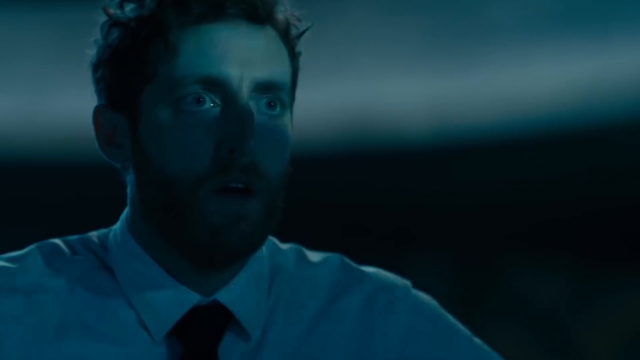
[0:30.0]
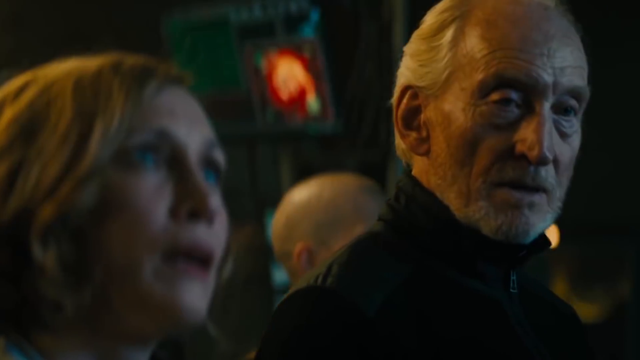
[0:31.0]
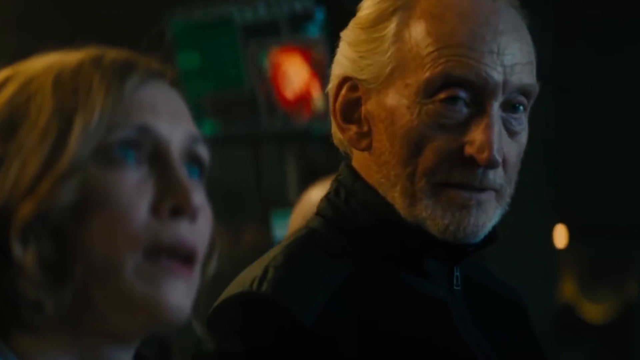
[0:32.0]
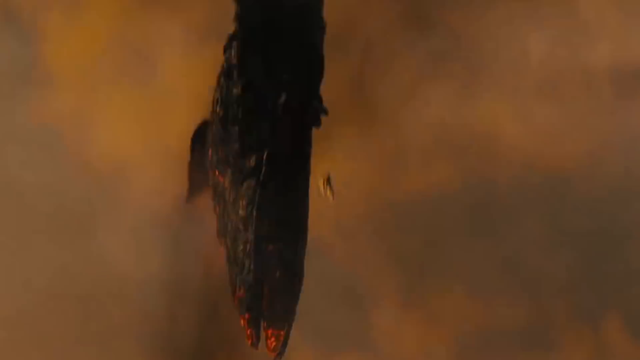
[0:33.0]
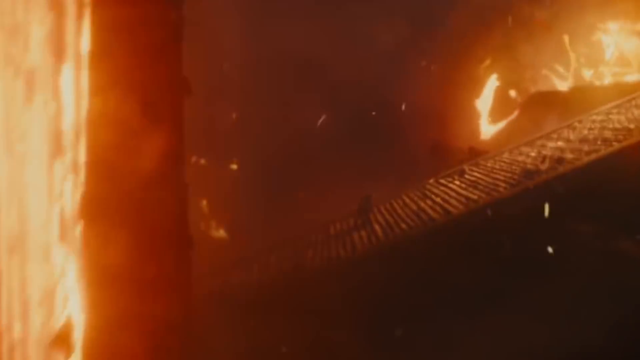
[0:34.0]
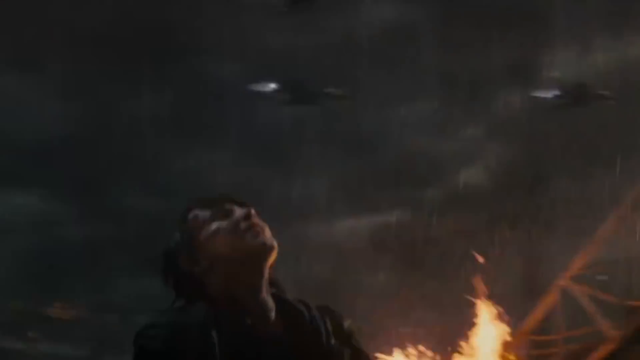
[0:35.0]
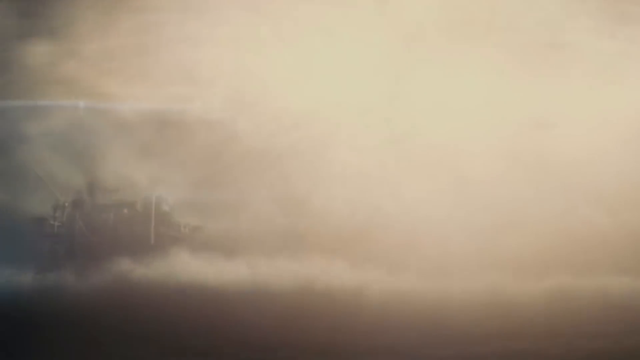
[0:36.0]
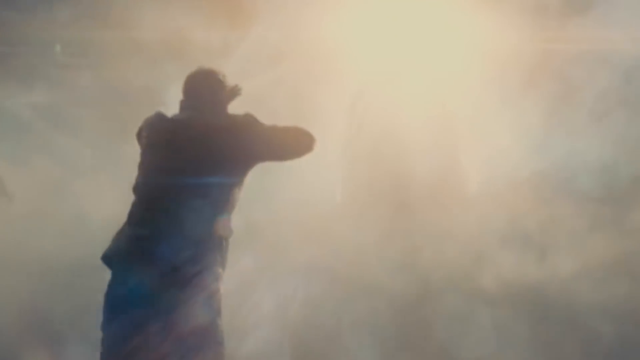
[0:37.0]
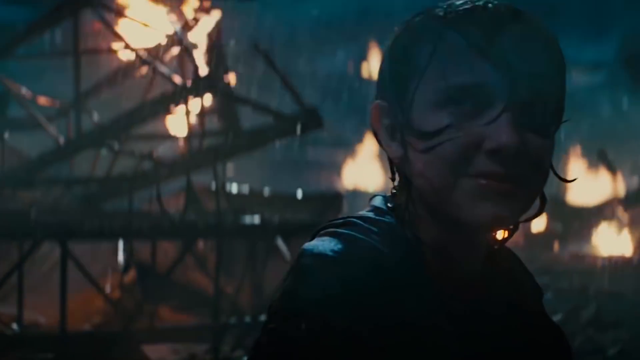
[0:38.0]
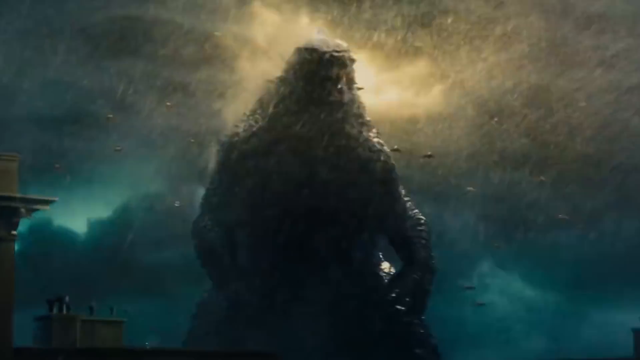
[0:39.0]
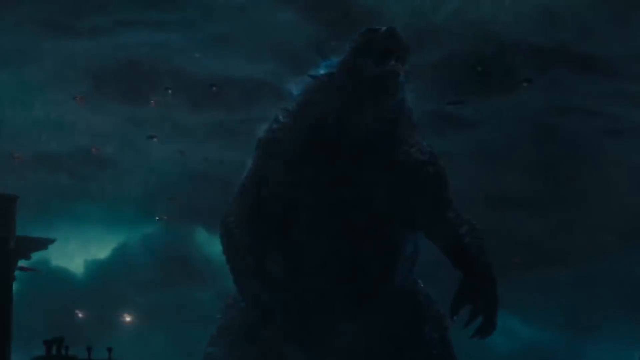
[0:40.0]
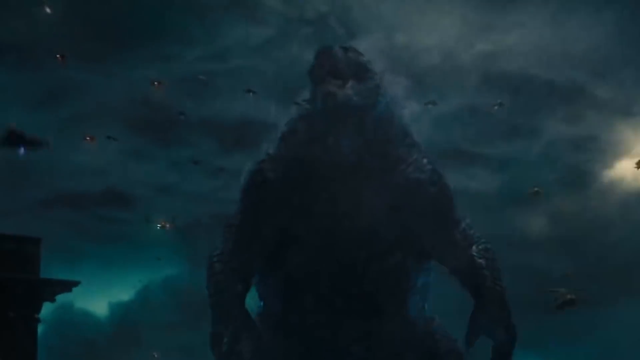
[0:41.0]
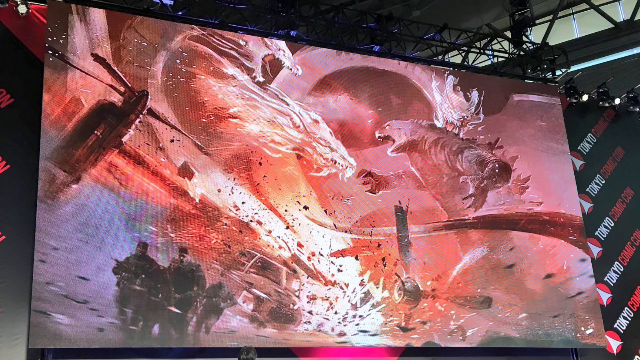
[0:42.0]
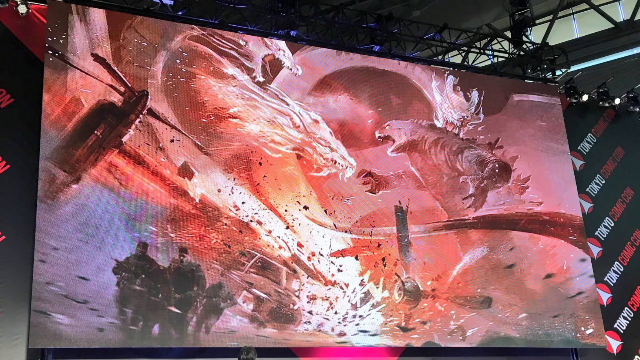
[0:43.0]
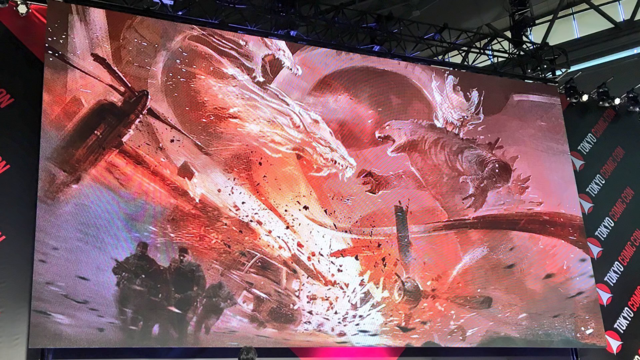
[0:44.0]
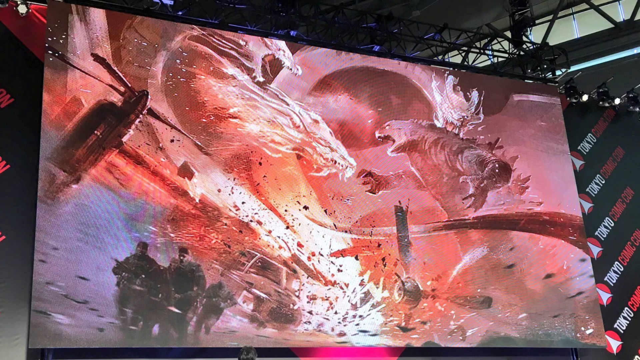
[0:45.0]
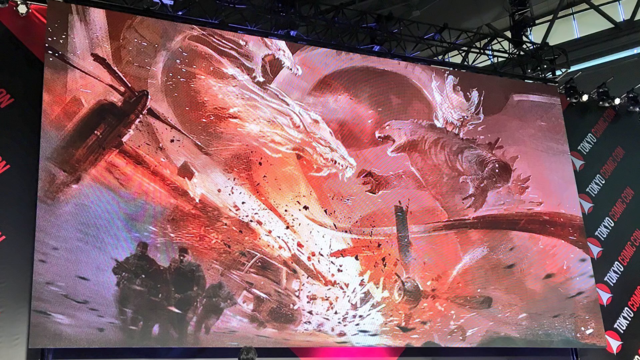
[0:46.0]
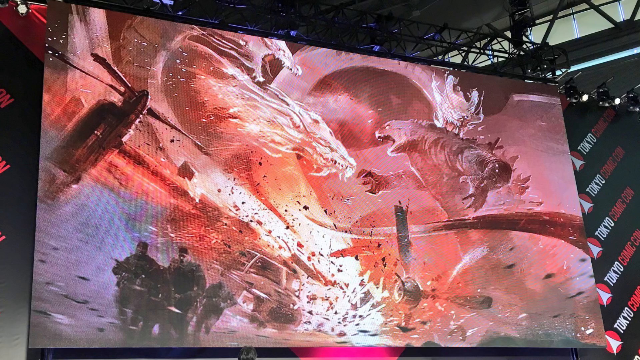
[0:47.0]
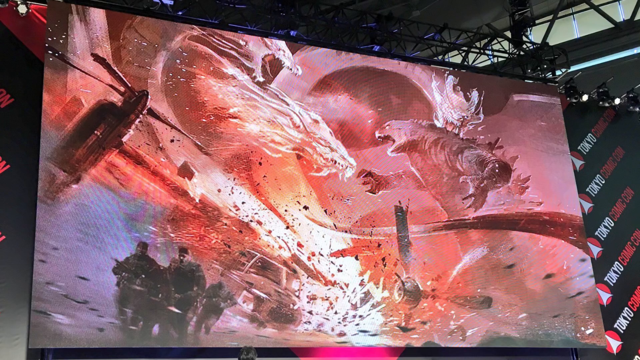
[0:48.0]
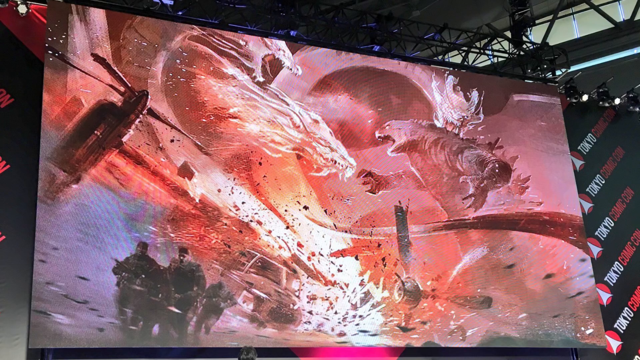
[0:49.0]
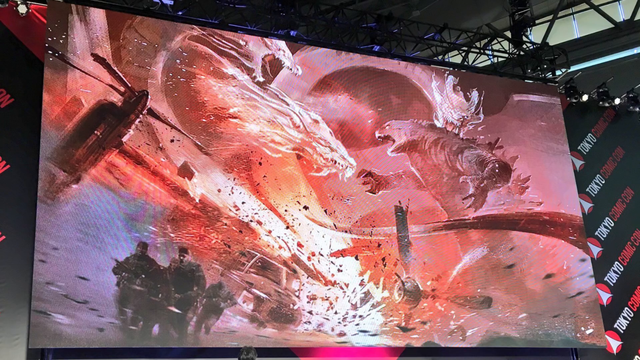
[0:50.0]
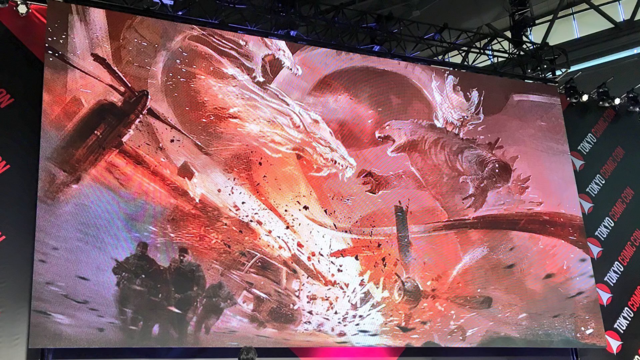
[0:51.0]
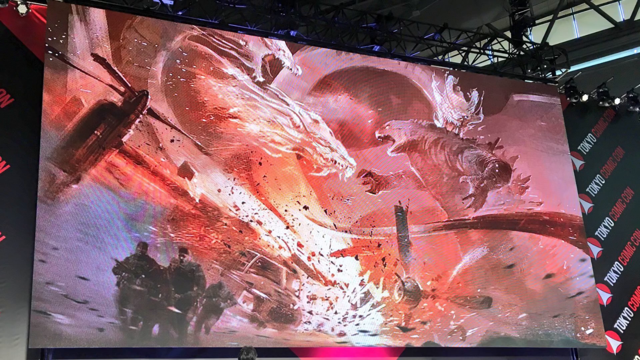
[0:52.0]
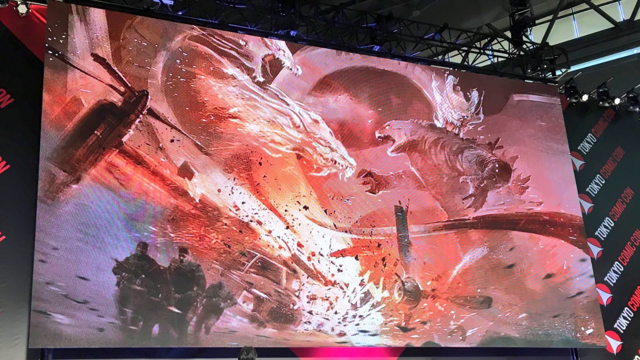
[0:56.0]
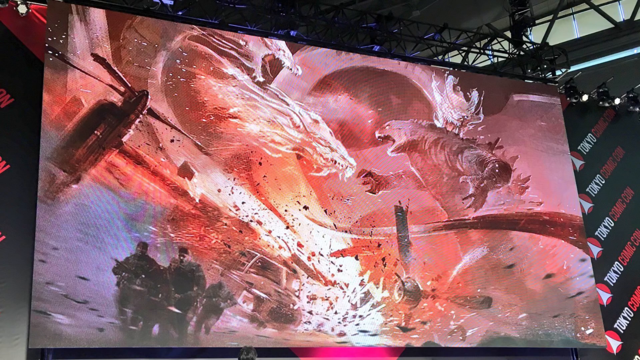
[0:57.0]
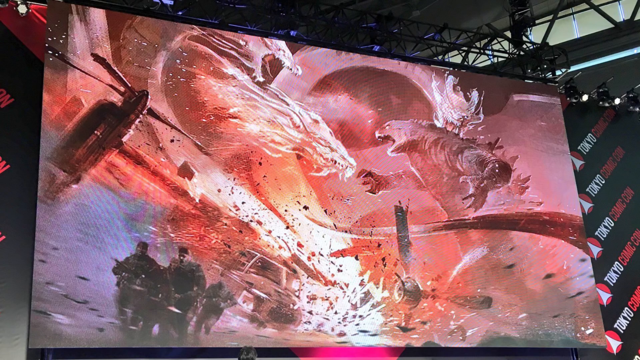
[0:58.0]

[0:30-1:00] A white man with black hair and a short brown beard wears a white shirt and a black tie. Another man, who is white and looks cold, wears a black jacket; next to him is a woman with blue eyes and brown hair who is looking up, and behind them a red light can be seen. A creature with huge wings flies. The video is fast-paced and changes quickly. Someone is inside a spaceship with the light on, in a place that looks full of smoke against a red background. A child smiles in the rain. A creature that looks like Godzilla looks toward the camera while multiple aircraft fly behind it, appearing to fire shots. A screen then shows a creature that looks like Godzilla fighting something with three heads that looks like a dragon. There is destruction with red flames, people run away from the wreckage, and the overall background is red.